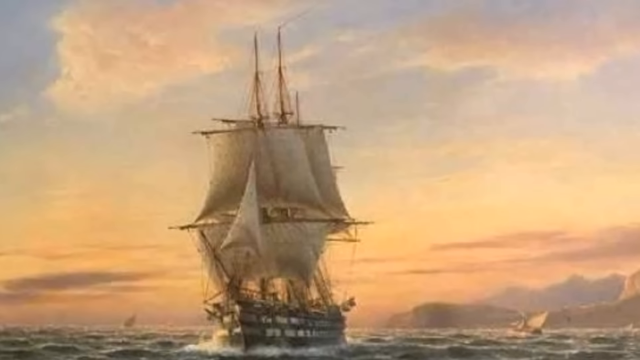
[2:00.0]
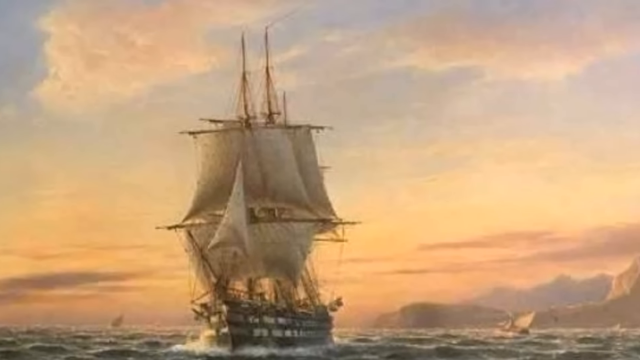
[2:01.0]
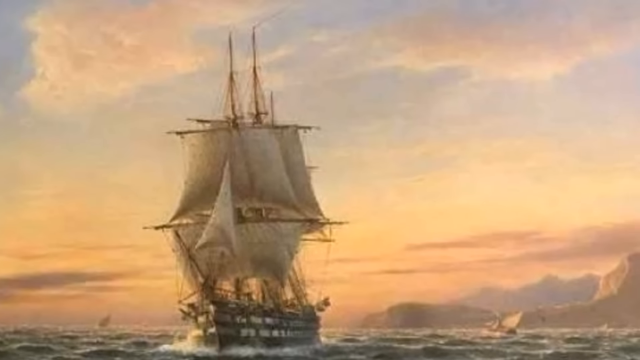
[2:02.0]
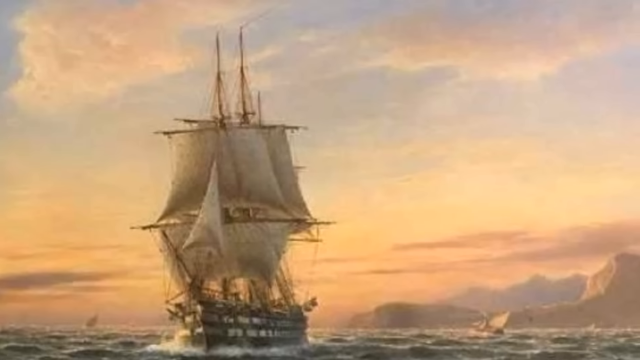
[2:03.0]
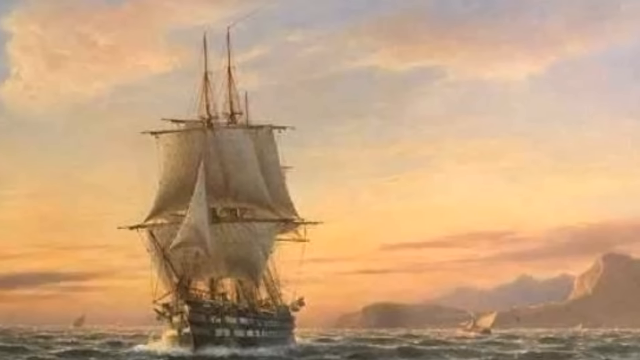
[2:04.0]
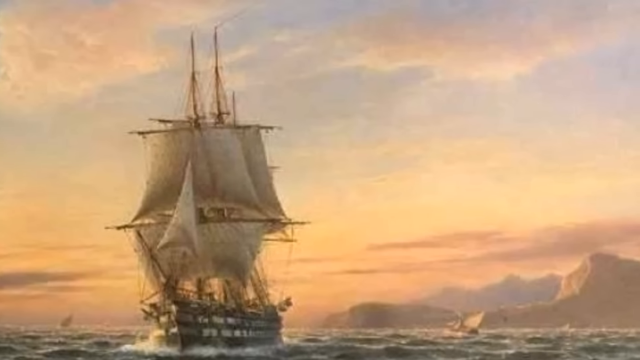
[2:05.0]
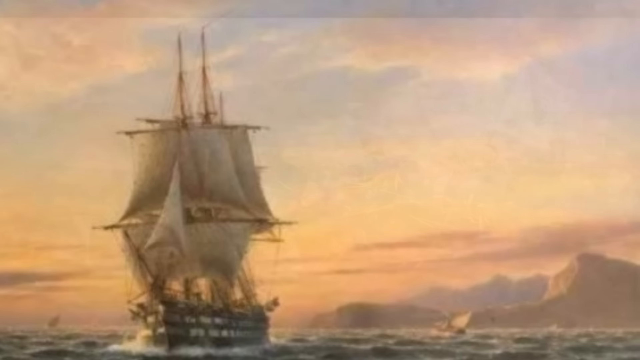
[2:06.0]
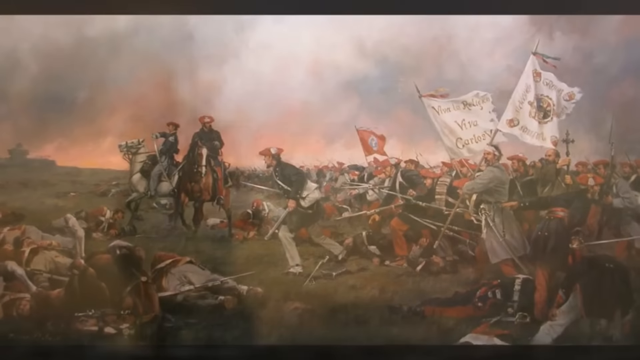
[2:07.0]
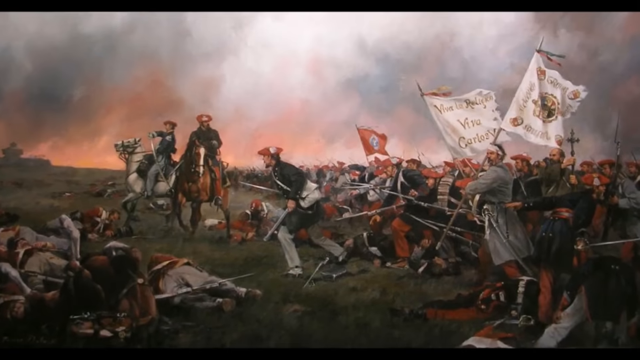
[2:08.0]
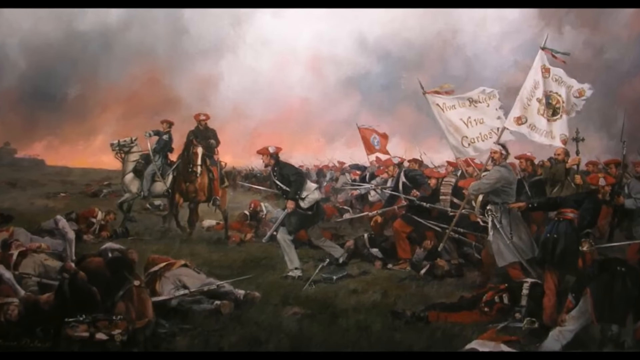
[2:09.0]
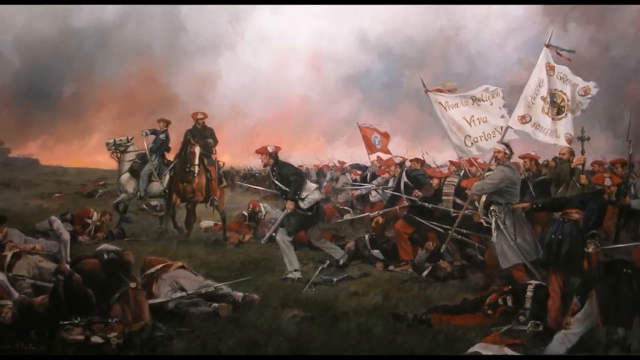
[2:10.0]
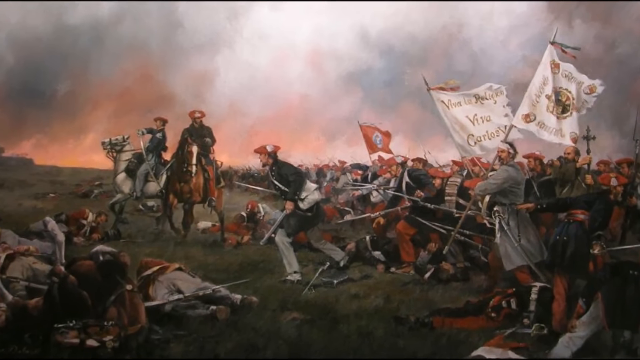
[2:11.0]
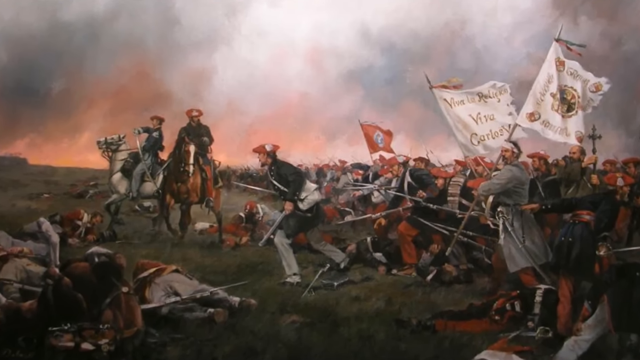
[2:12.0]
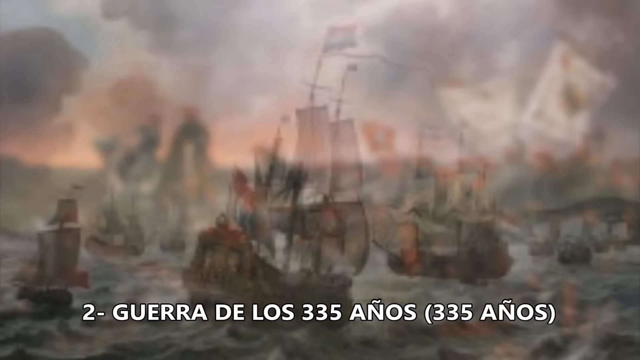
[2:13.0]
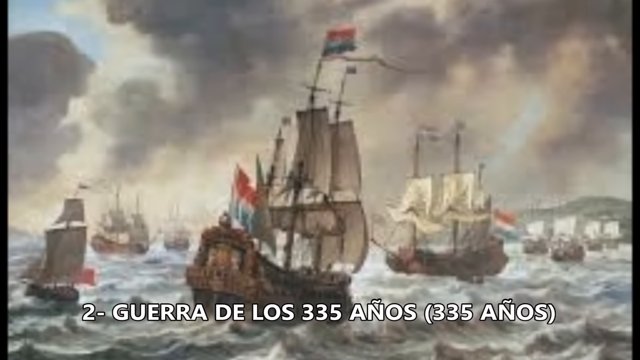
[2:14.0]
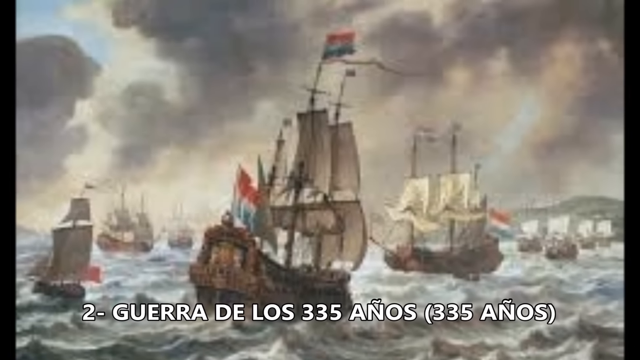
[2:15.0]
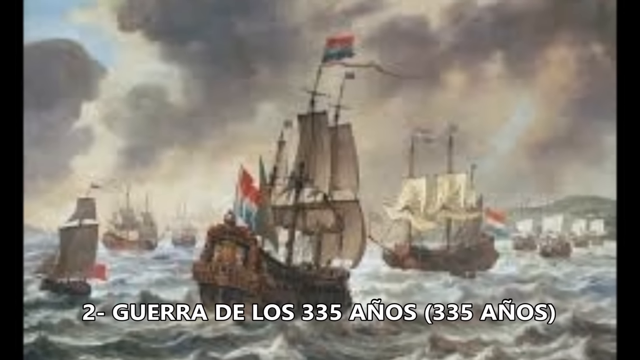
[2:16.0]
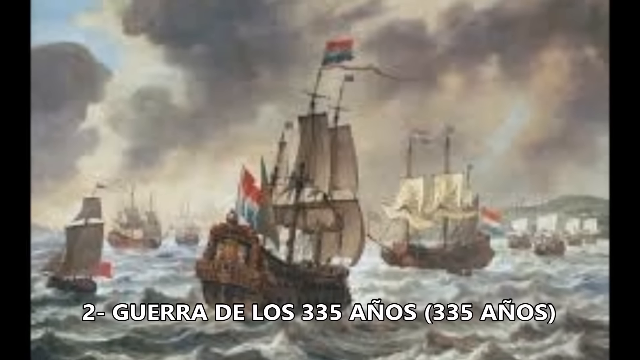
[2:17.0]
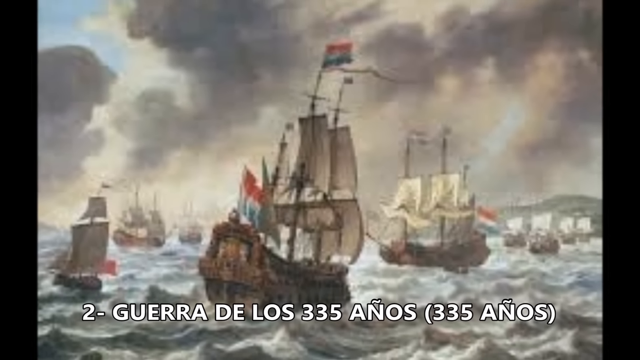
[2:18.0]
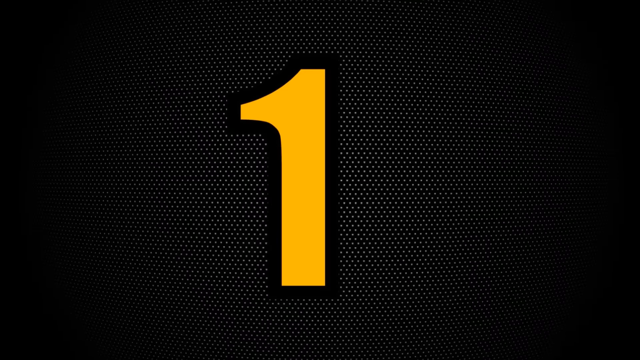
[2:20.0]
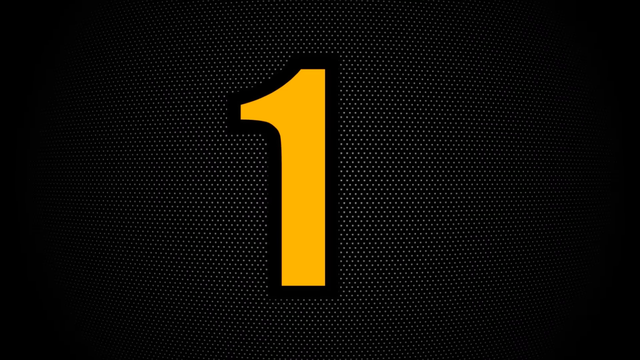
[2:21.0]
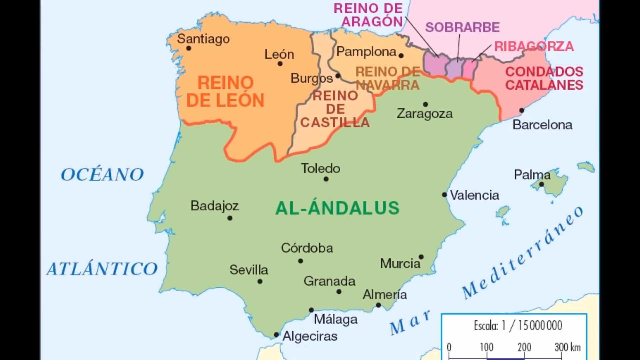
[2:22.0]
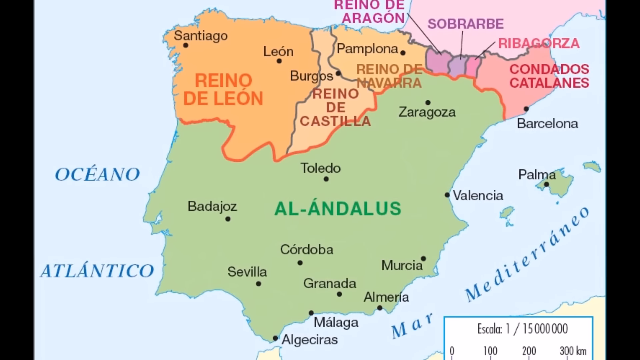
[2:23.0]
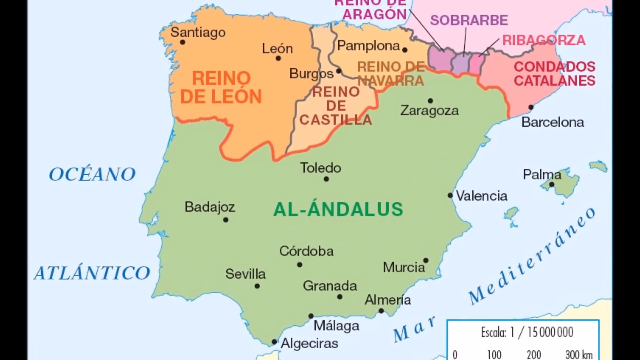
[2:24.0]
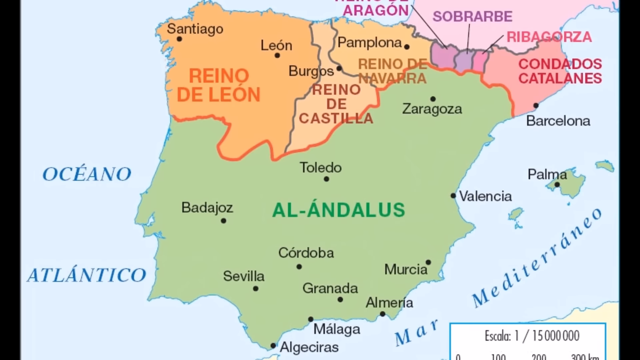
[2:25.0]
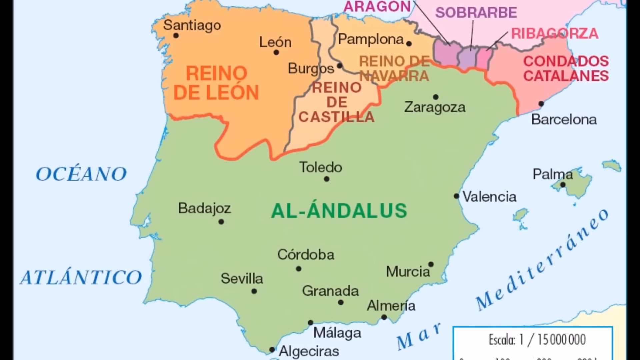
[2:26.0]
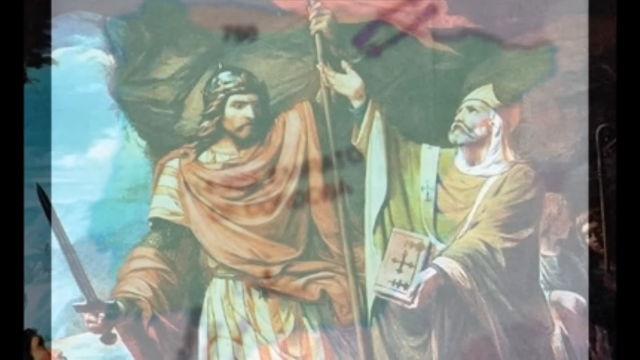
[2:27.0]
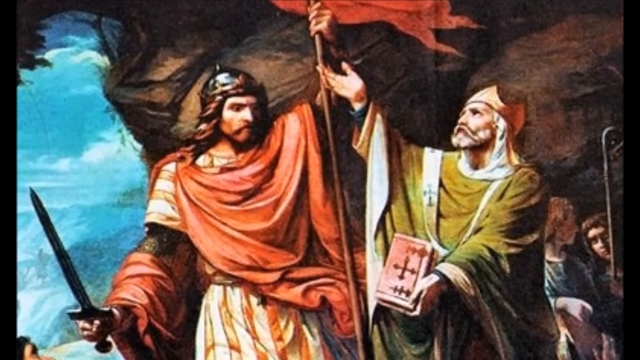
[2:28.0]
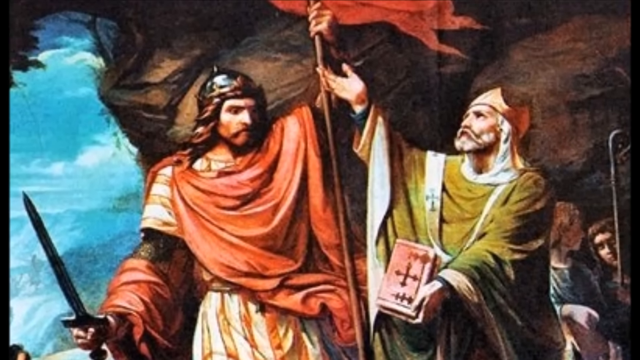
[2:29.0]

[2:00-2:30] A great 18th-century warship with huge sails and many gun ports is shown. An army wearing red caps marches into battle carrying banners, one of which says "Viva La Legion, Viva Carlos V"; the red caps are possibly those of the Carlist armies of the 19th-century Spanish civil wars. The war is identified as the war of 335 years. A map of Spain then identifies Spain's northern regions, including Navarra, Castile, Aragon and León. The video then seems to change wars as a medieval Catholic figure appears.